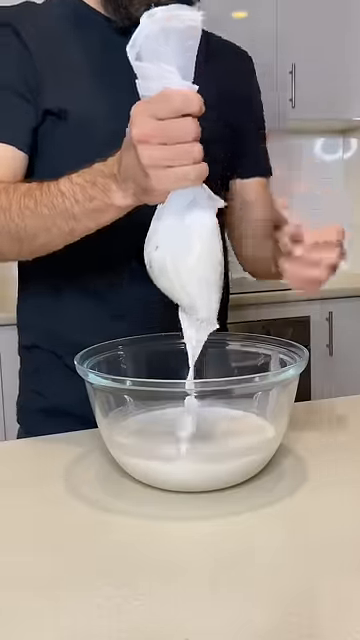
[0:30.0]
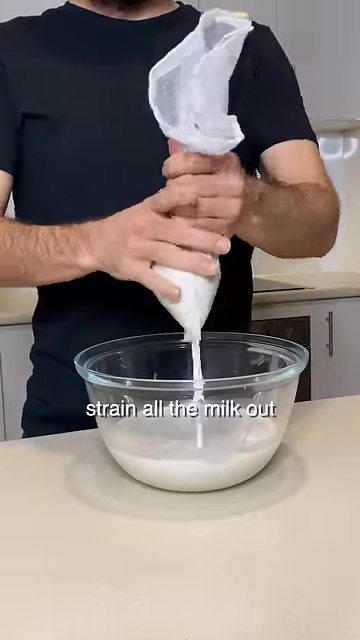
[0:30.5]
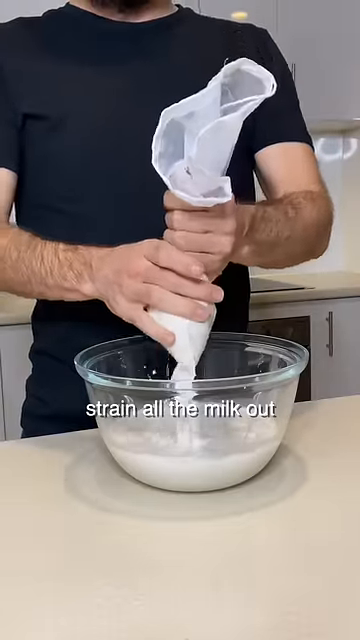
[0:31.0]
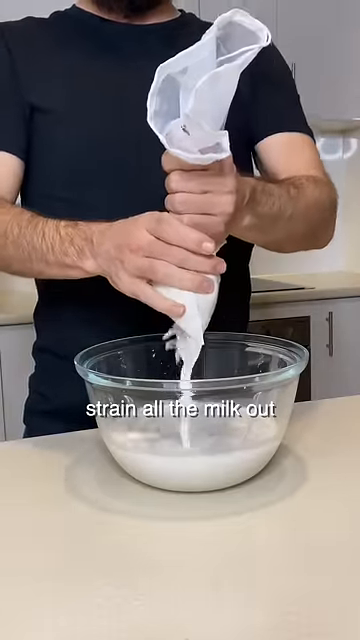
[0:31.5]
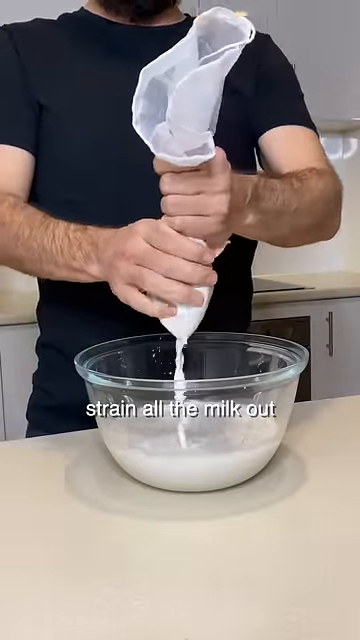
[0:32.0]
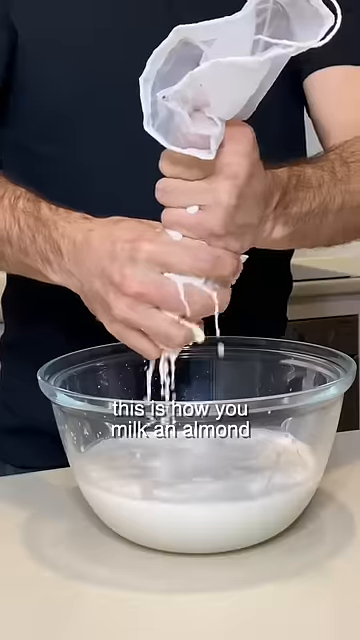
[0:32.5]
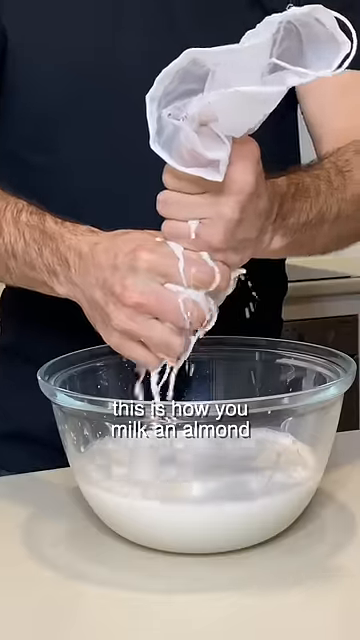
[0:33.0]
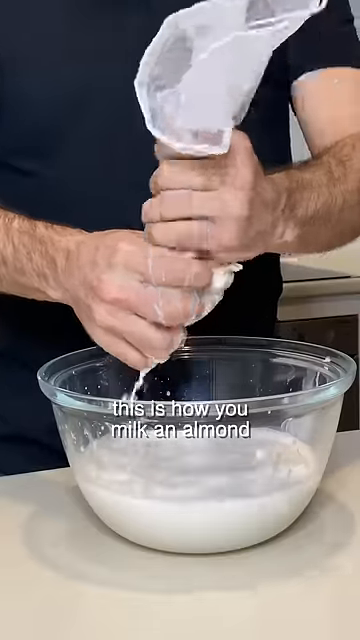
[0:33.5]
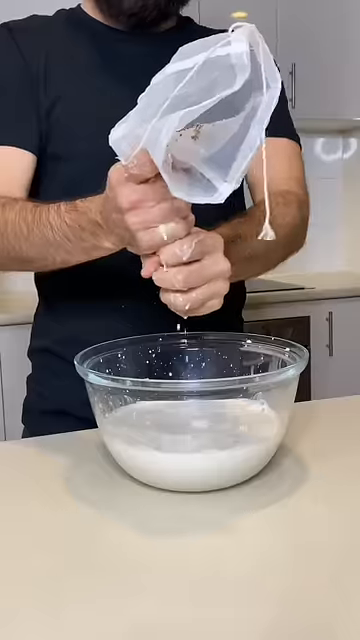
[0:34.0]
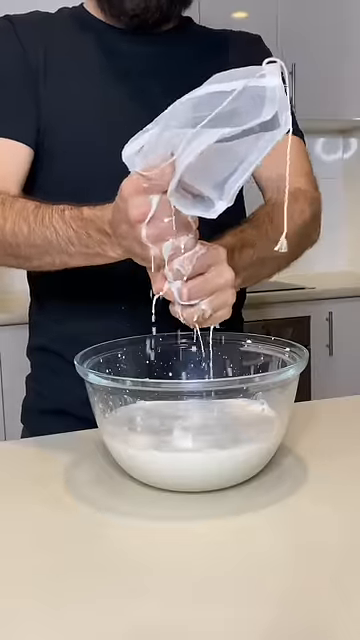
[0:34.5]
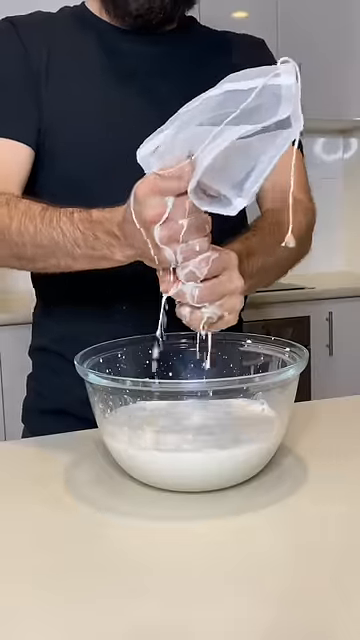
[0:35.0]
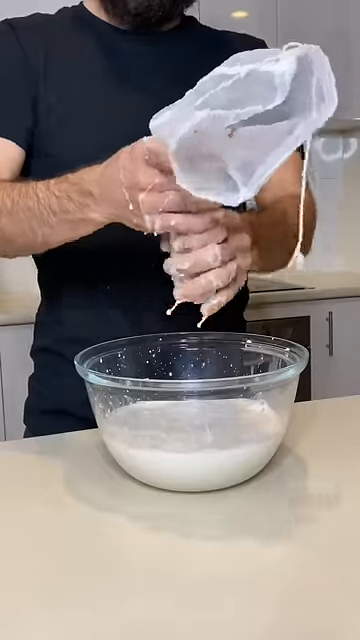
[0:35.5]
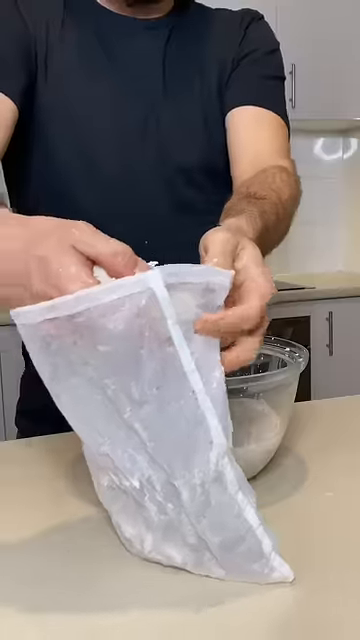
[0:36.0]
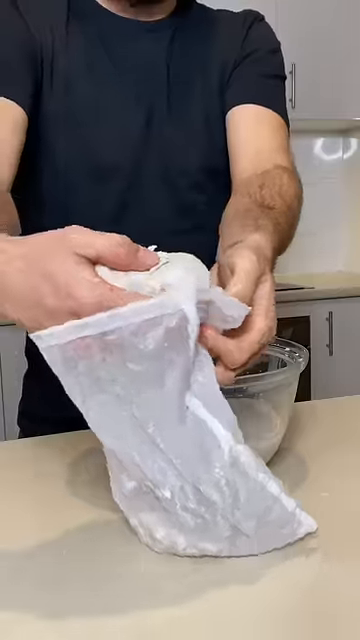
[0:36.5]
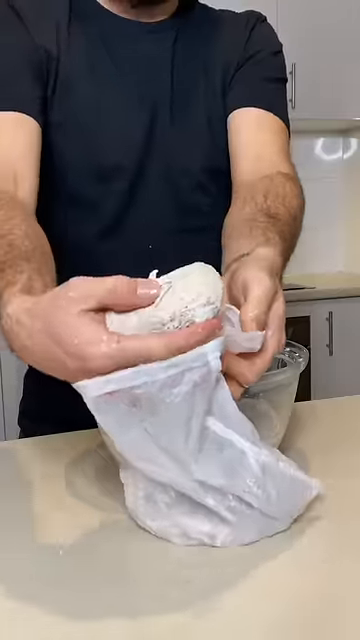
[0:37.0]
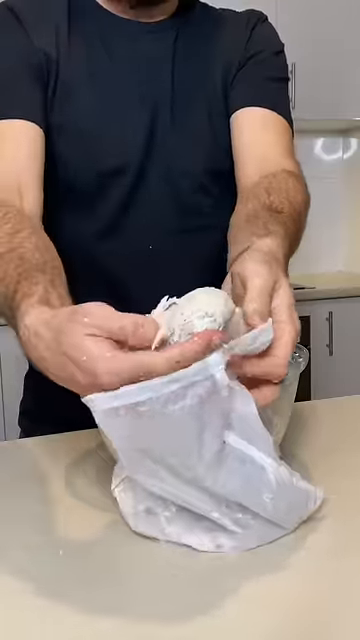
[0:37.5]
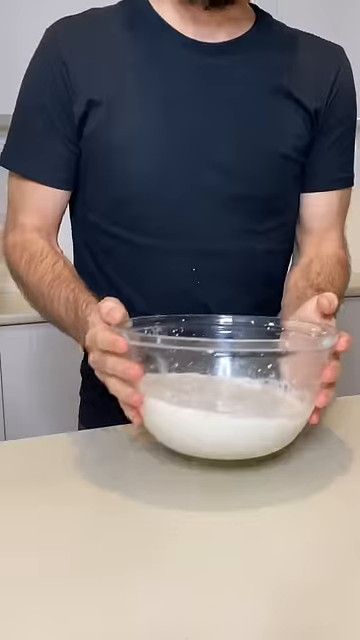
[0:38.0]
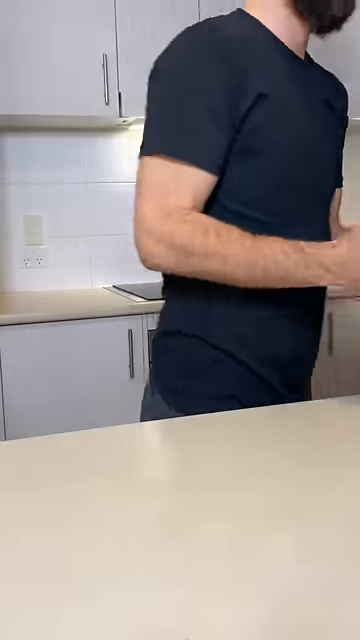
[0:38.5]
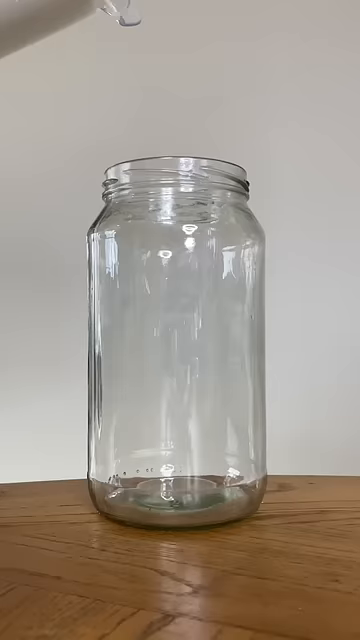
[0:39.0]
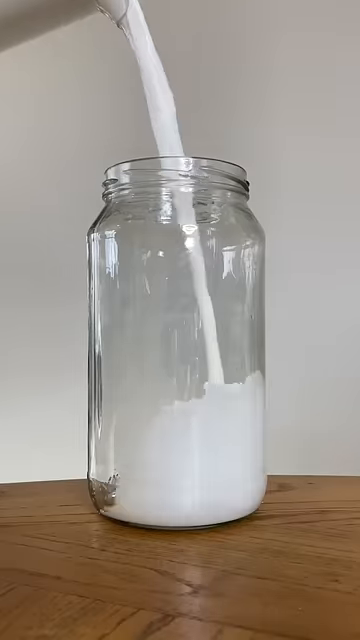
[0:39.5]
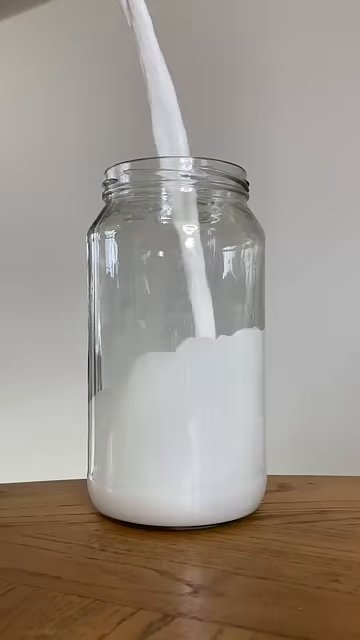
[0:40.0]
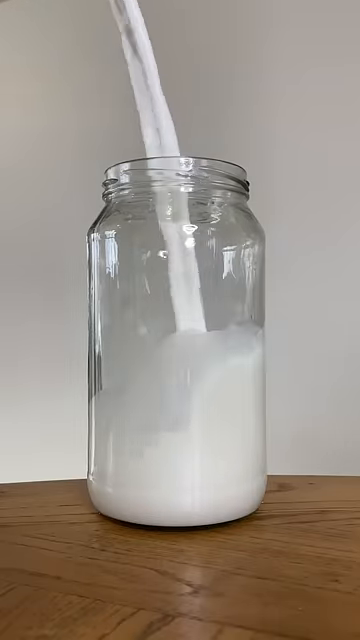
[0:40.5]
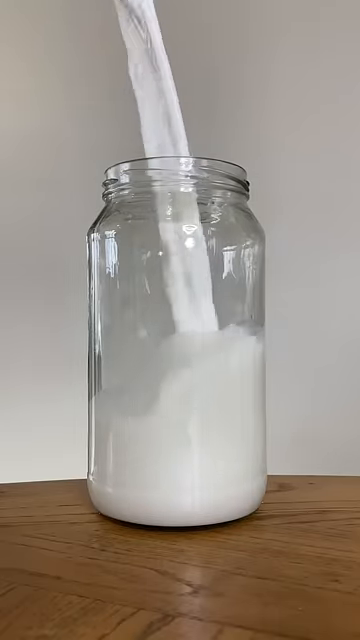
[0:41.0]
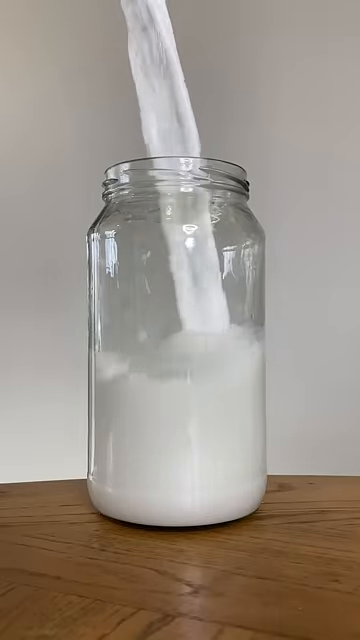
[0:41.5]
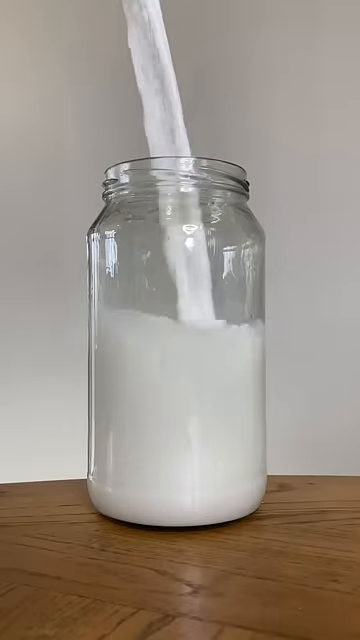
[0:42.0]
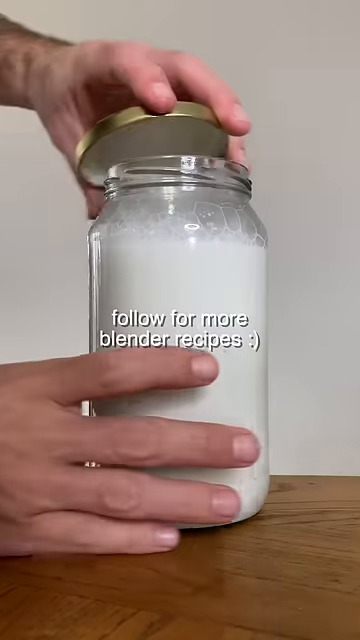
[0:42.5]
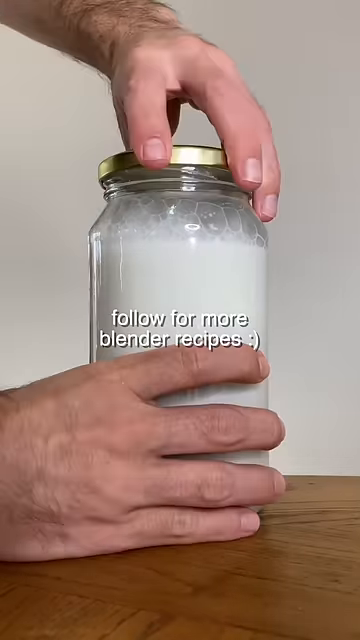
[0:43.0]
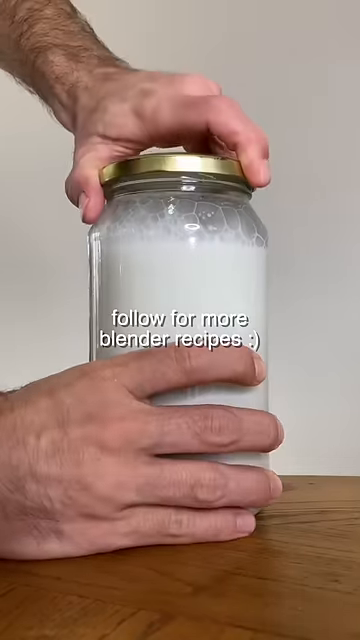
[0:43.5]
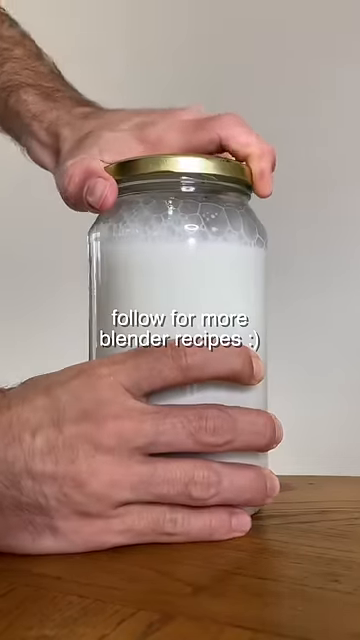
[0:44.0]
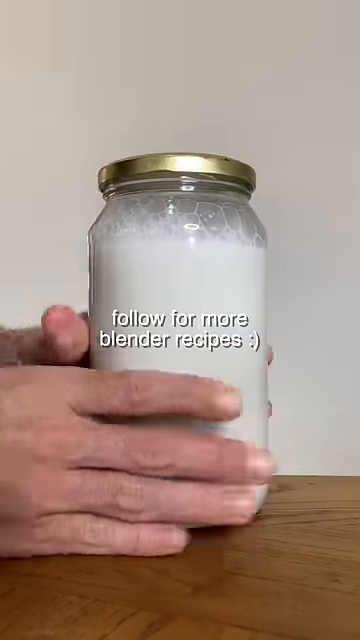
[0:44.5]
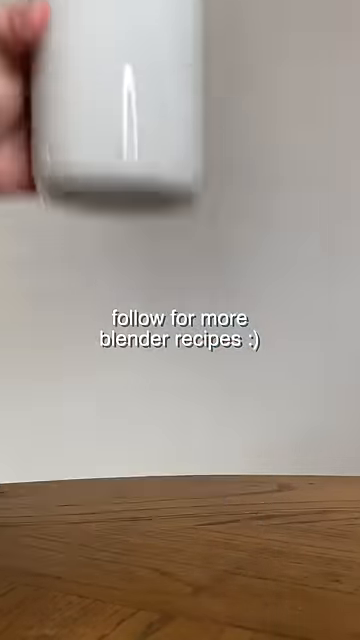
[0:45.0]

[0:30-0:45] The blended contents are in a milk nut bag, and the milk drains into a bowl as the bag is slowly squeezed down, probably four or five times, until a solid is left in the bag. The solid can be taken out of the bag, and the almond milk is poured from the bowl into a container, ideally a glass jar, for storage.